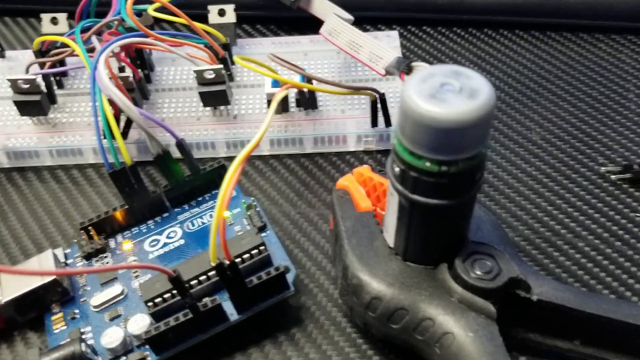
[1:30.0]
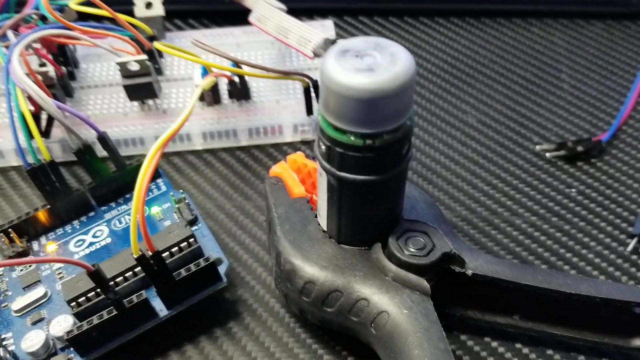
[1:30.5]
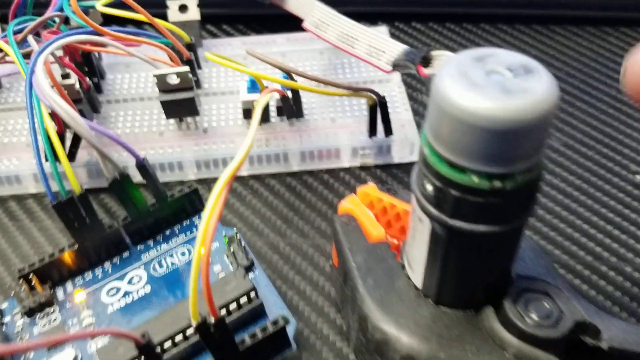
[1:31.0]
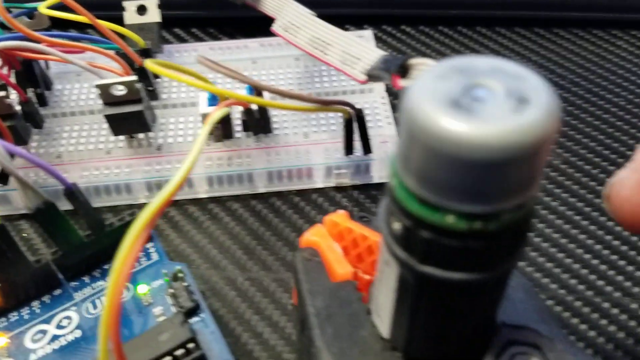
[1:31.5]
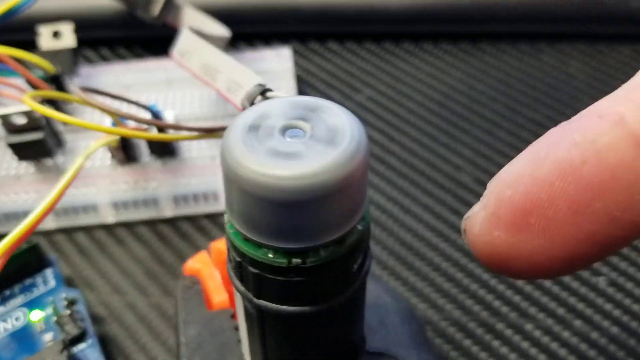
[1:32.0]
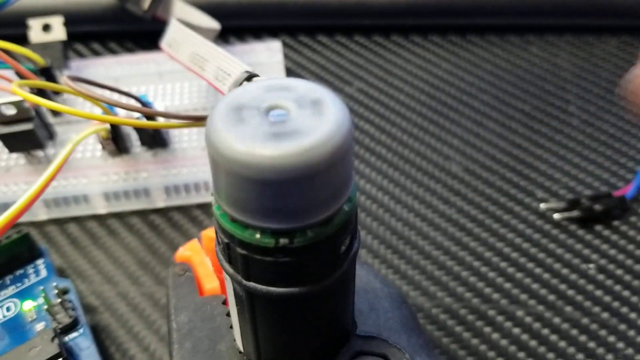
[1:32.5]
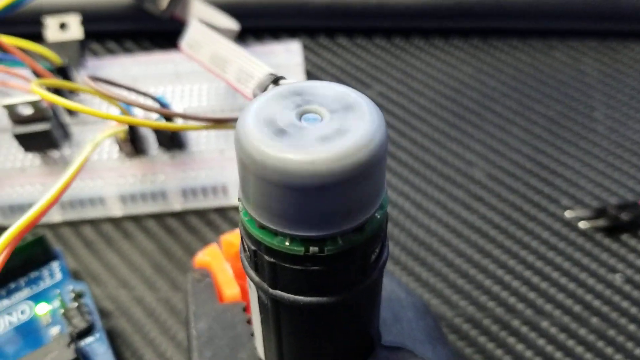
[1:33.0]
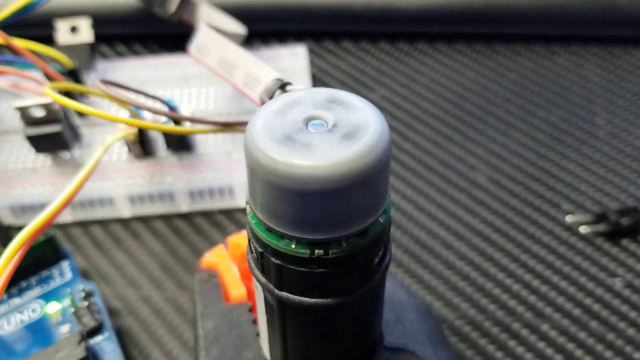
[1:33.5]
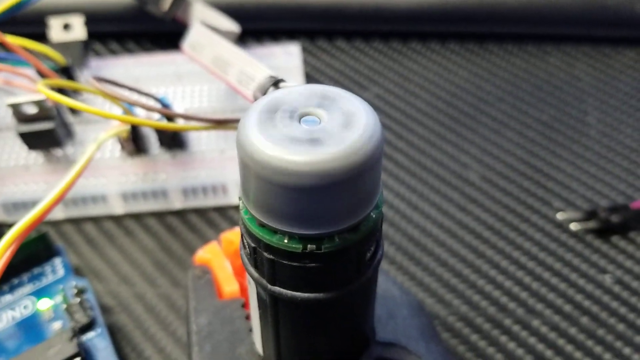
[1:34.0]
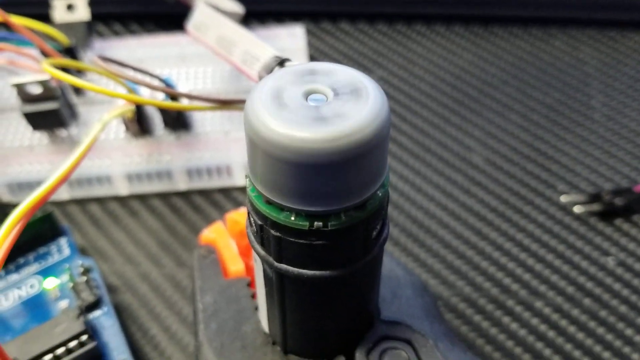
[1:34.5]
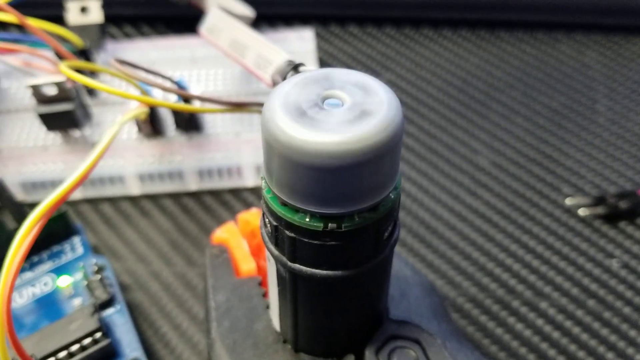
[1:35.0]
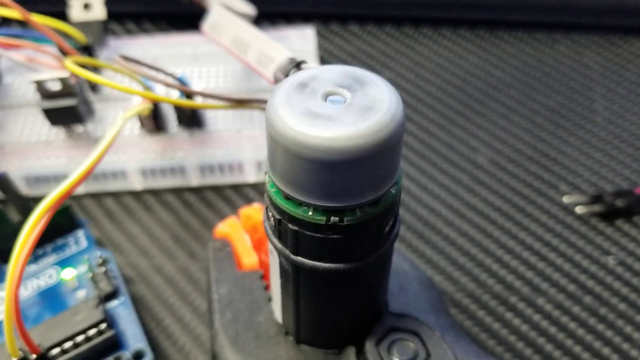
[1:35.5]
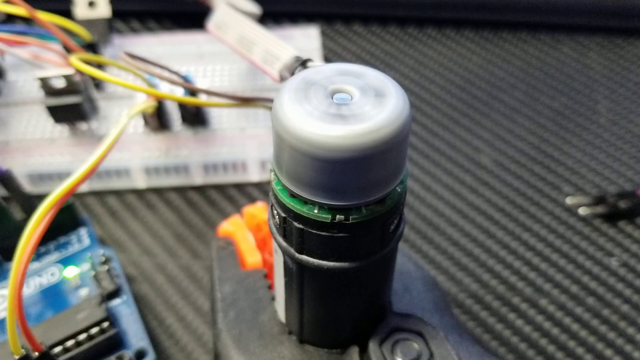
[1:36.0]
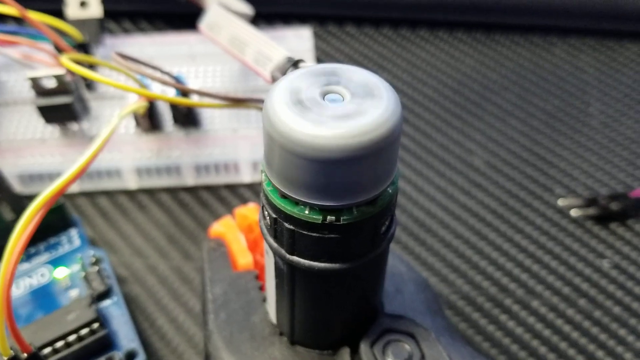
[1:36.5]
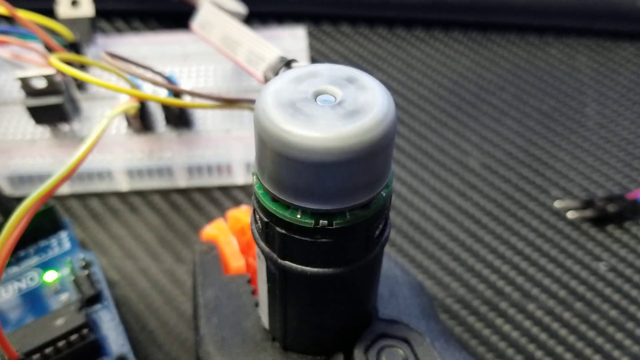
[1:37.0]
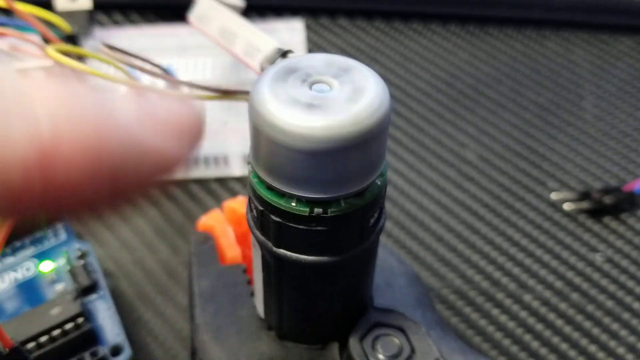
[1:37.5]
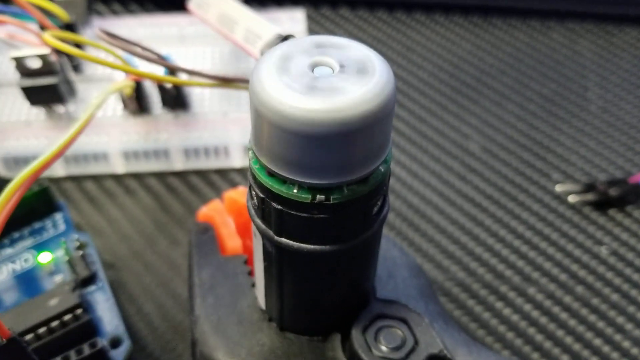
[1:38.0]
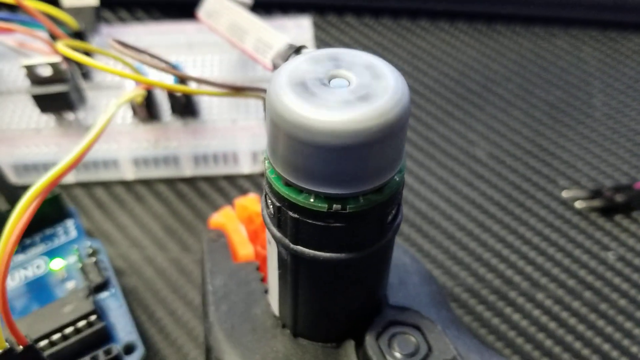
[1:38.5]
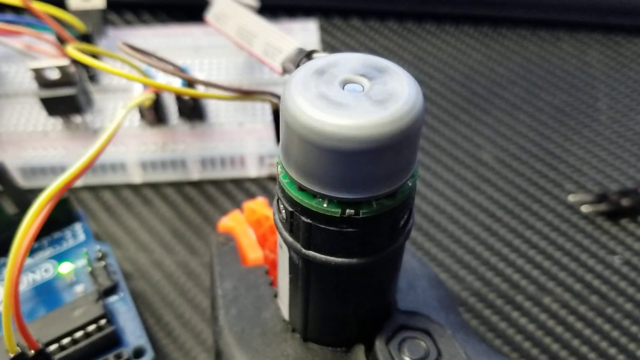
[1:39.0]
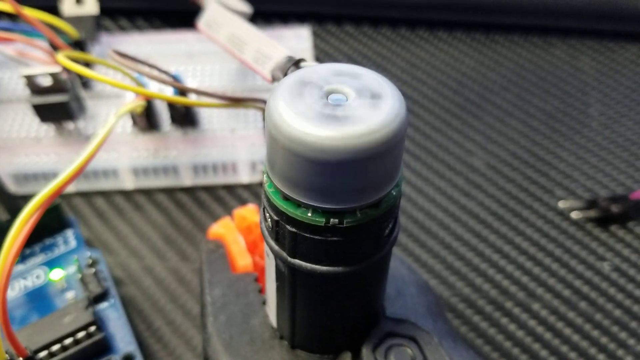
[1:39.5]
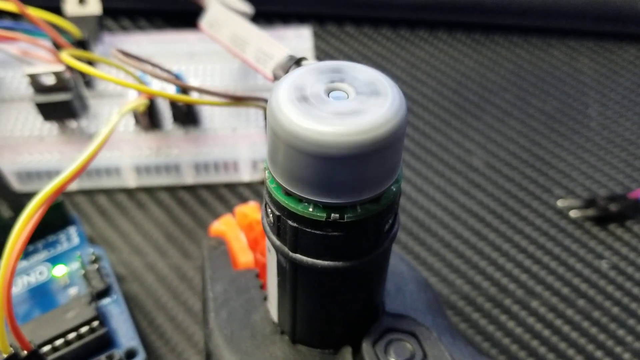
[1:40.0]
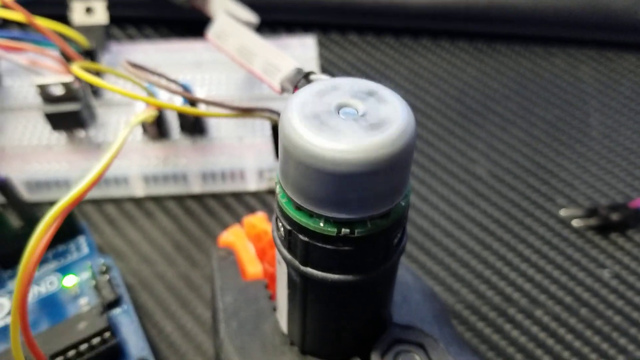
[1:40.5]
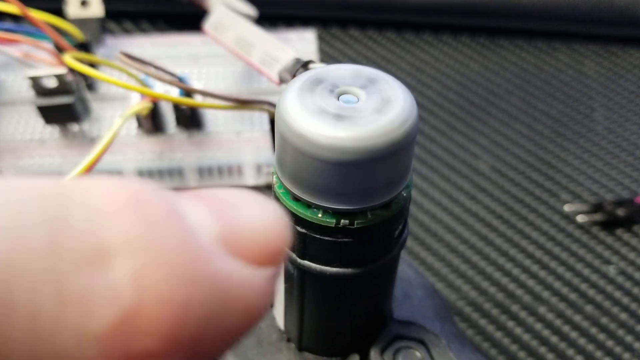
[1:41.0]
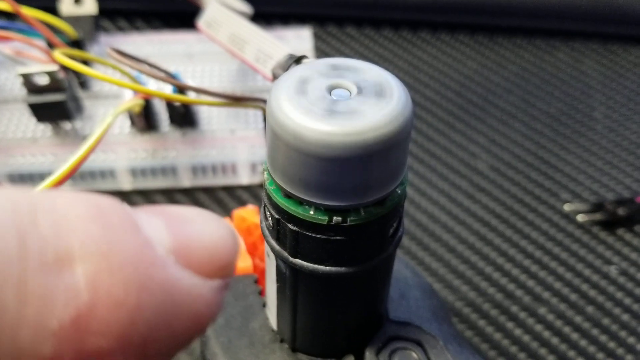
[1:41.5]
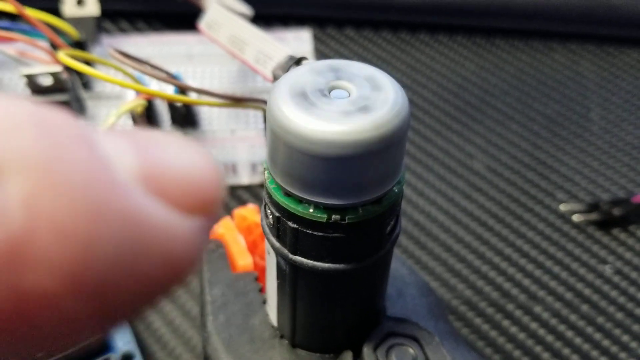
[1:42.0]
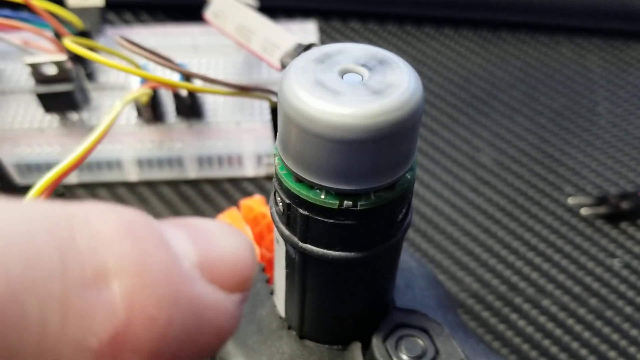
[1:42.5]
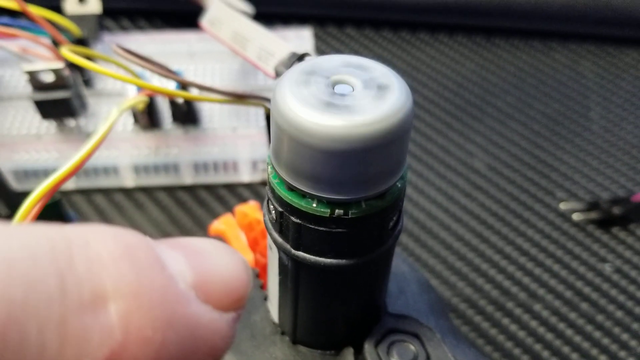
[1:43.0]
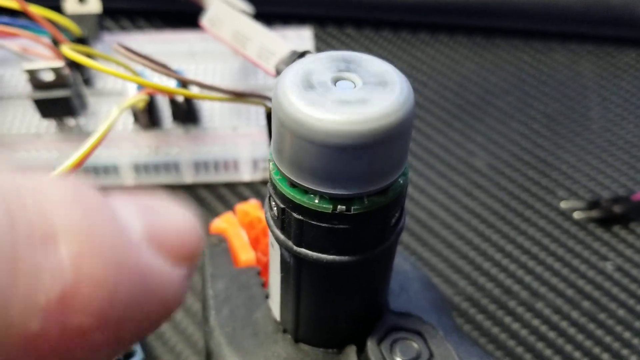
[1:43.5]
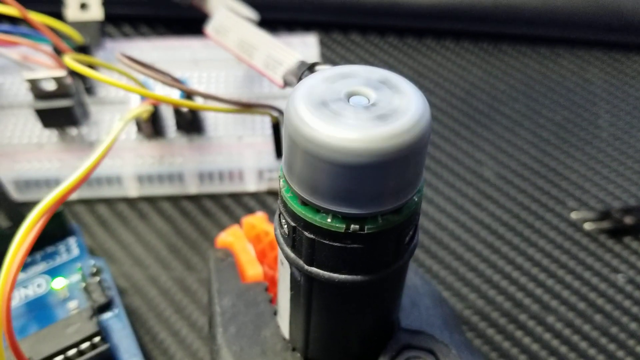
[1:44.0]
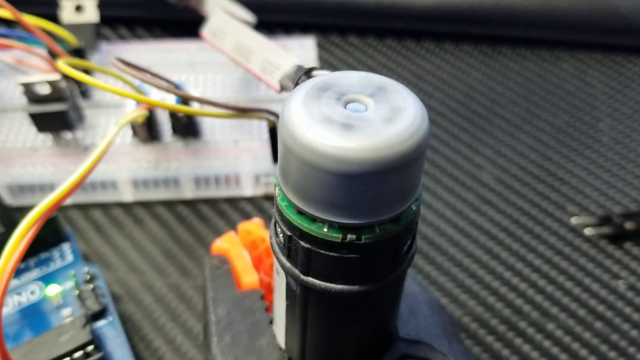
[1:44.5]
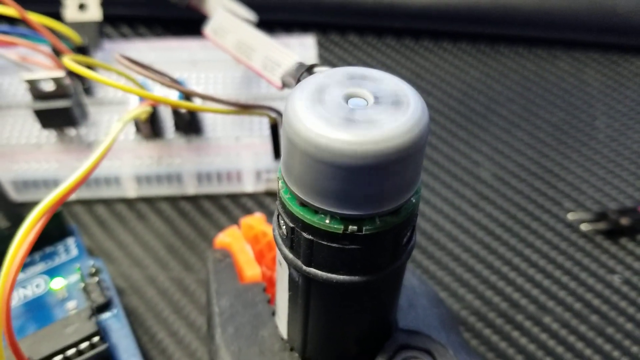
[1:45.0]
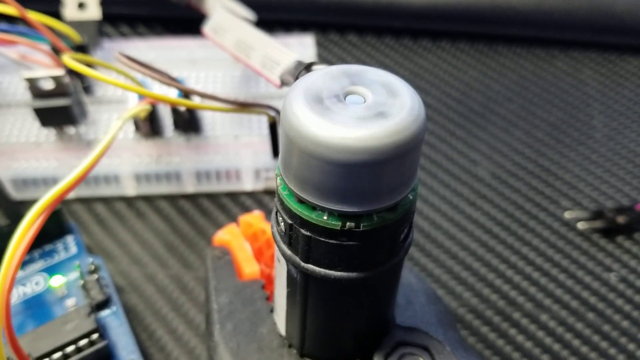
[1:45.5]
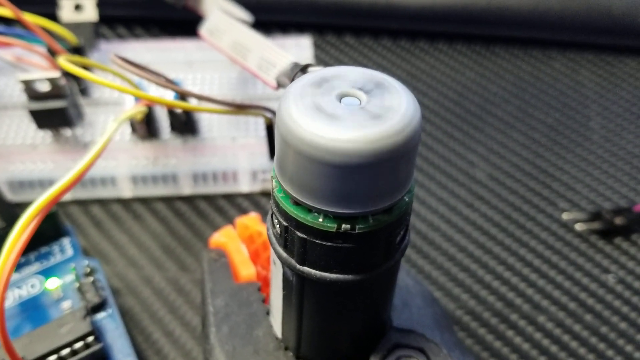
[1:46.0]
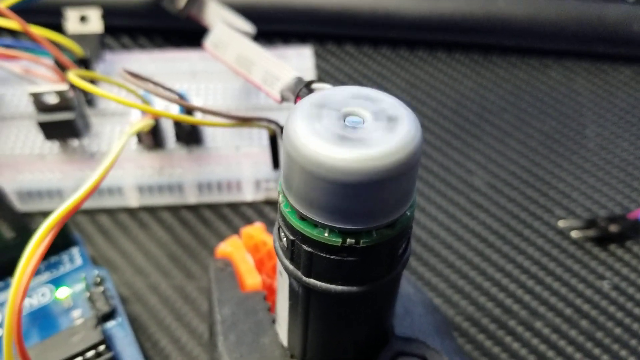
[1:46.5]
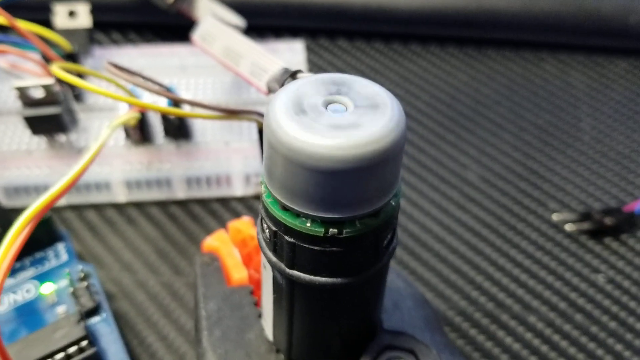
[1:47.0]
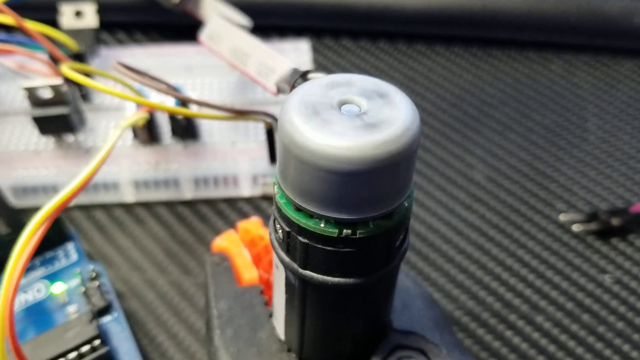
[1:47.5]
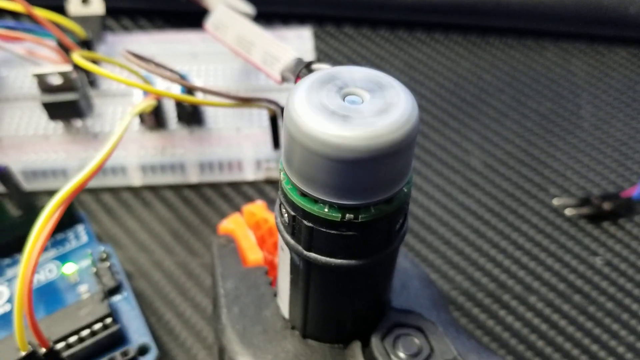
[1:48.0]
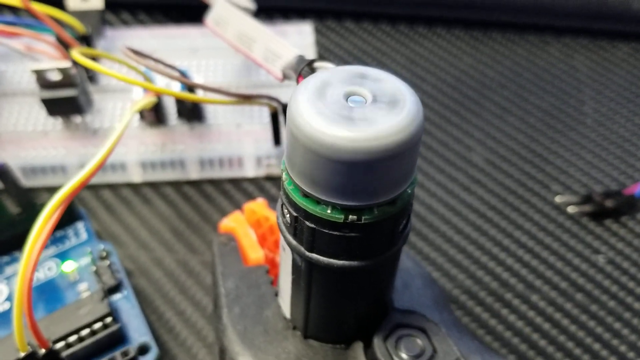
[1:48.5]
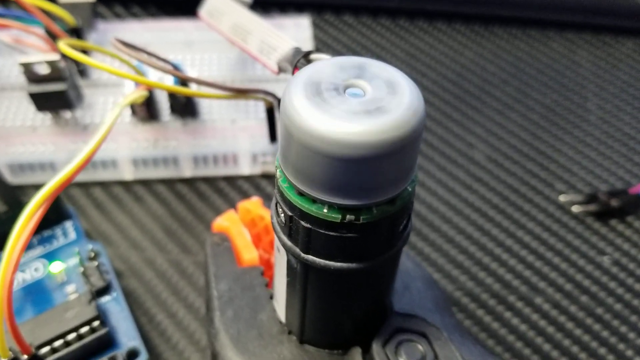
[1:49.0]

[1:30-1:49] Various electronic devices are strewn about on top of a black table with a textured surface. A blue device on the bottom left has various wires running out of it and into a white breadboard positioned at the top of it. The breadboard also has various wires colored orange, blue, green, purple, white, and red. At the bottom right rests a pair of black pliers with orange tips, propping up a cylindrical device that has a black base and a white rotating portion at the top spinning counterclockwise. The camera then moves to prominently display the rotating device as a hand motions toward it and then points at it. On the right side of the shot, a lone cable is visible.